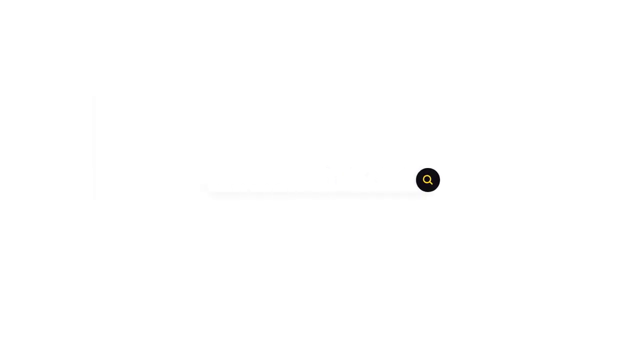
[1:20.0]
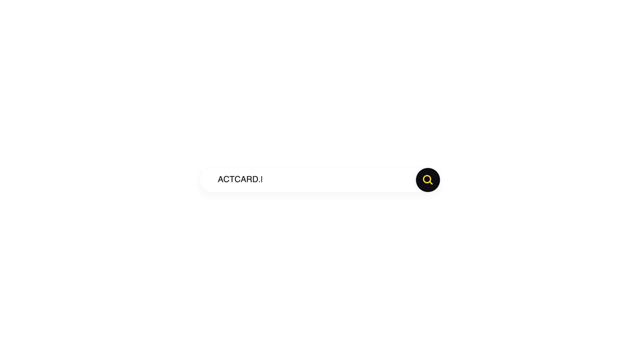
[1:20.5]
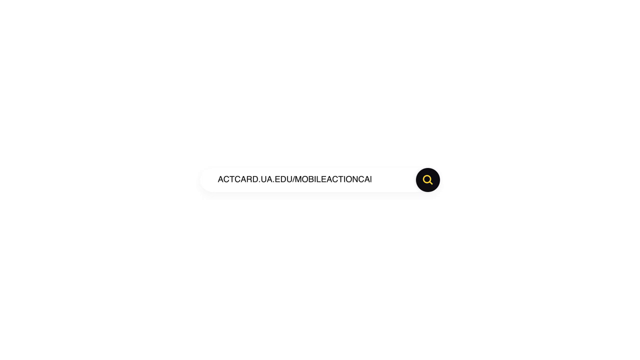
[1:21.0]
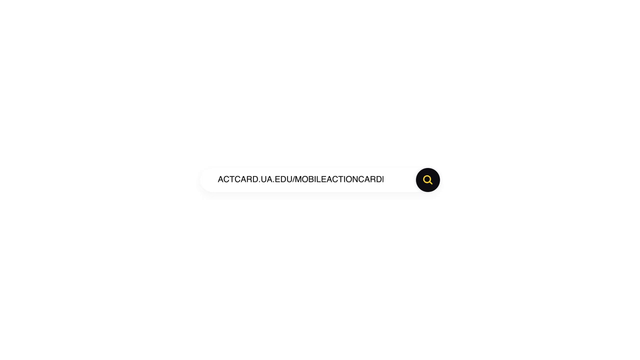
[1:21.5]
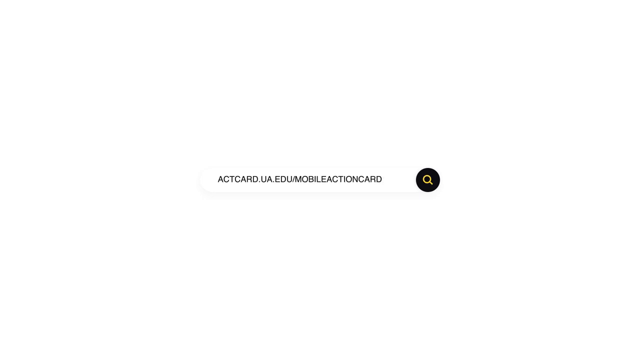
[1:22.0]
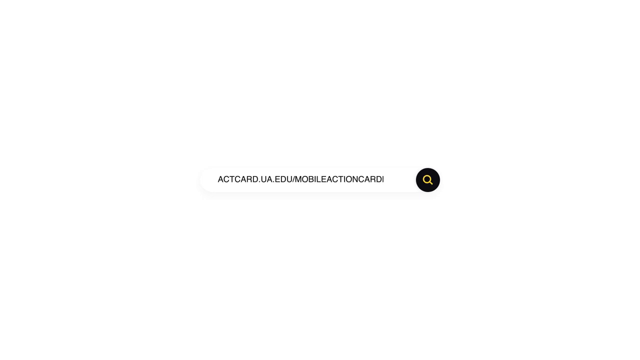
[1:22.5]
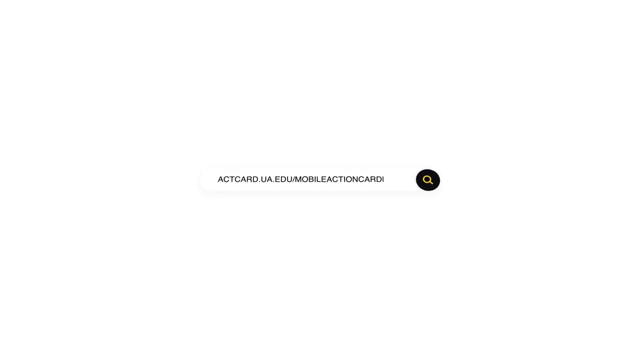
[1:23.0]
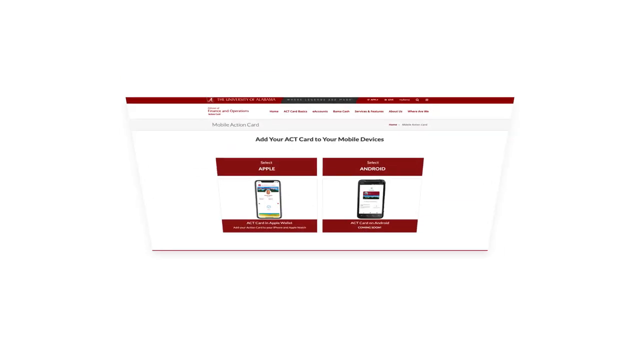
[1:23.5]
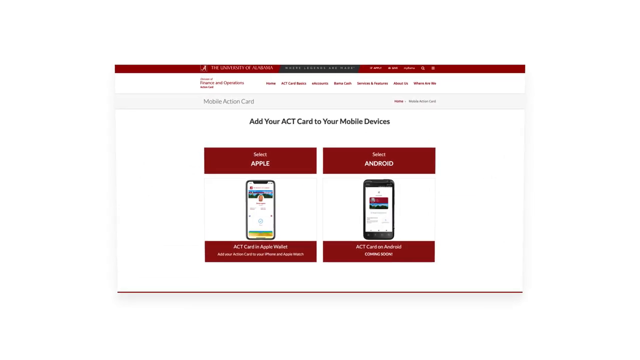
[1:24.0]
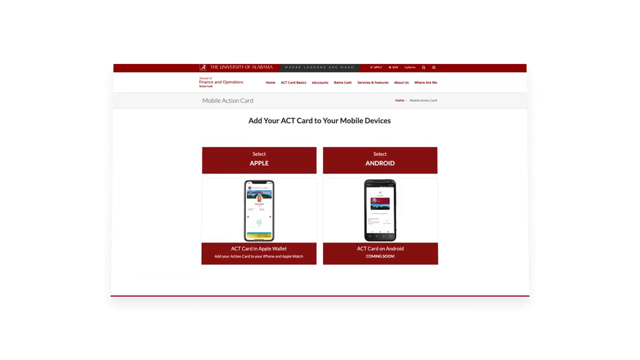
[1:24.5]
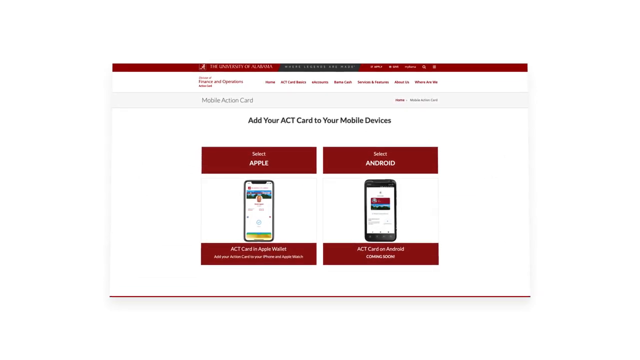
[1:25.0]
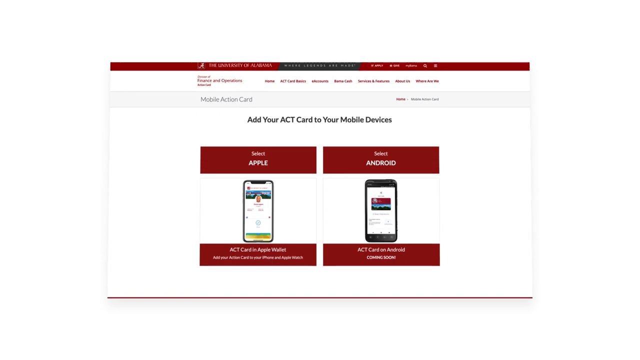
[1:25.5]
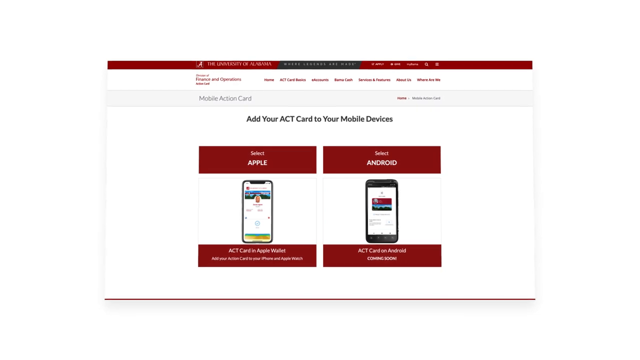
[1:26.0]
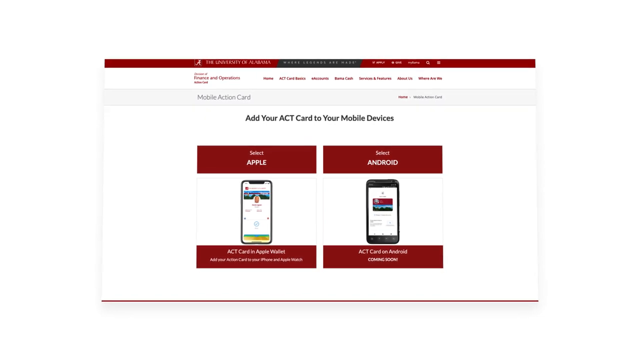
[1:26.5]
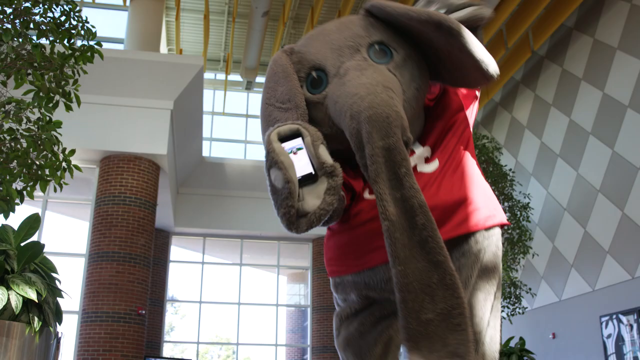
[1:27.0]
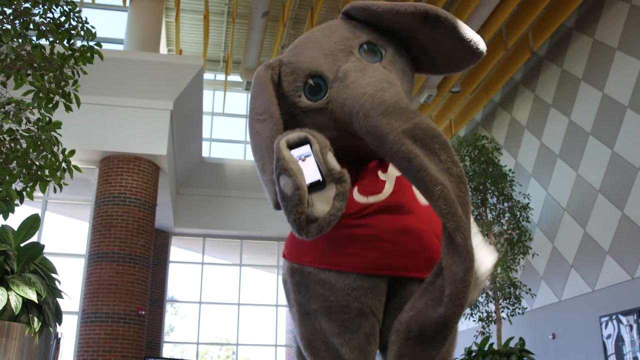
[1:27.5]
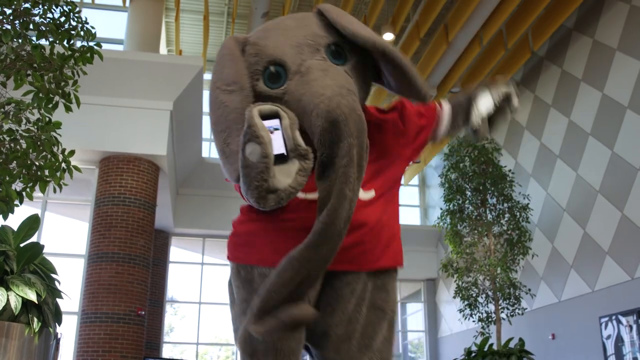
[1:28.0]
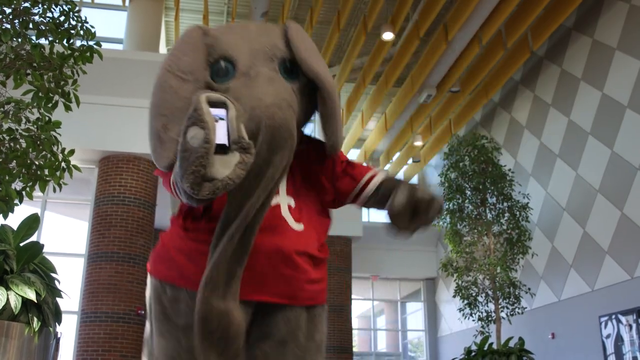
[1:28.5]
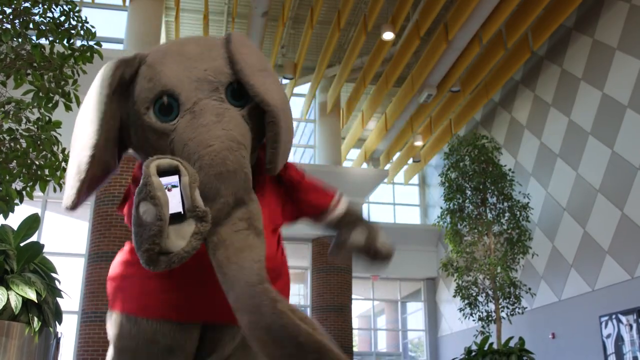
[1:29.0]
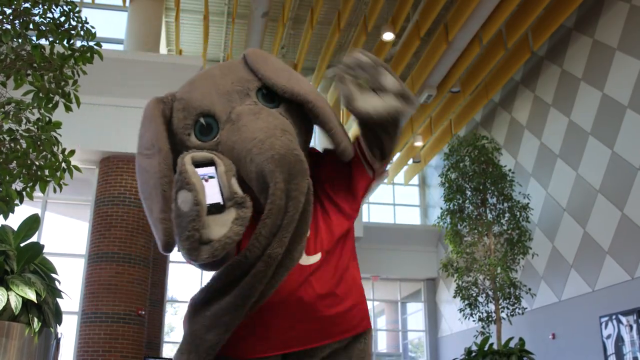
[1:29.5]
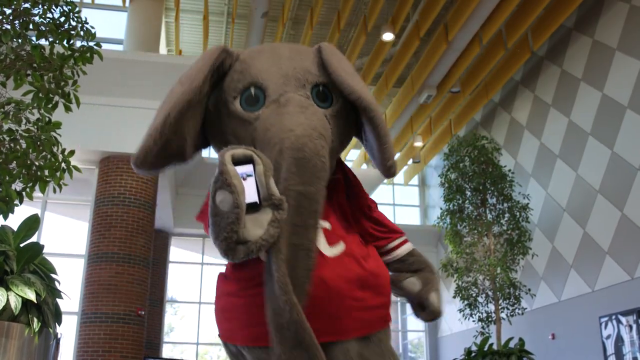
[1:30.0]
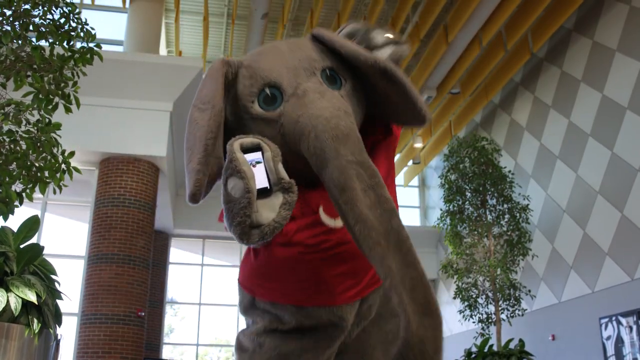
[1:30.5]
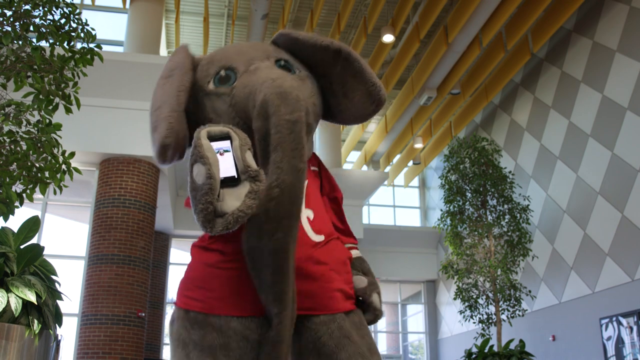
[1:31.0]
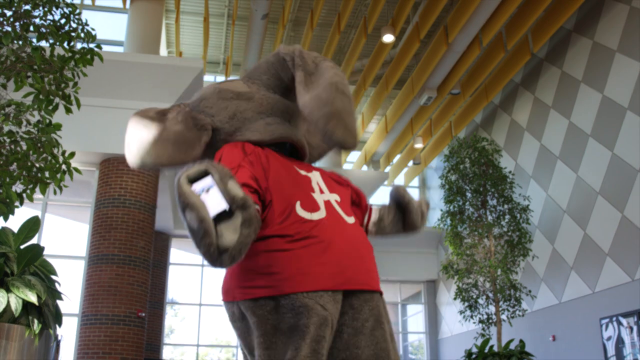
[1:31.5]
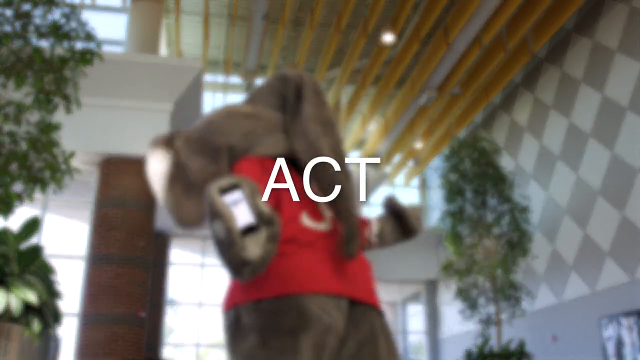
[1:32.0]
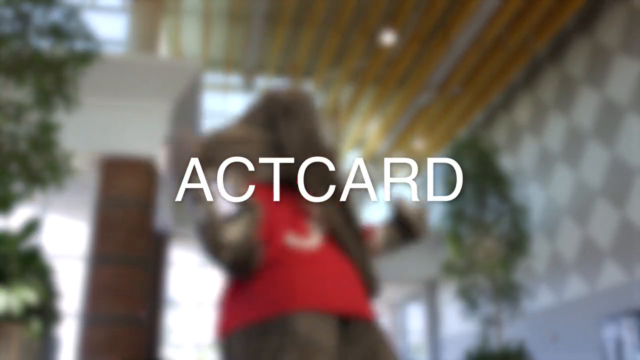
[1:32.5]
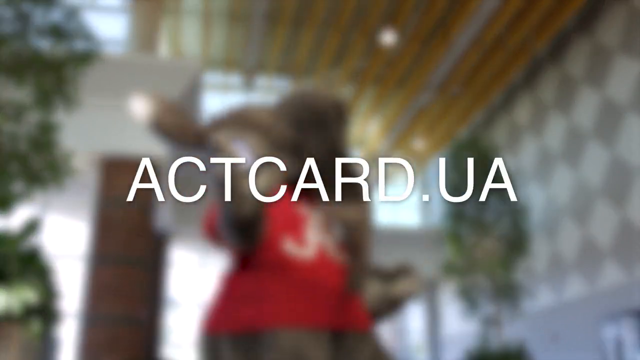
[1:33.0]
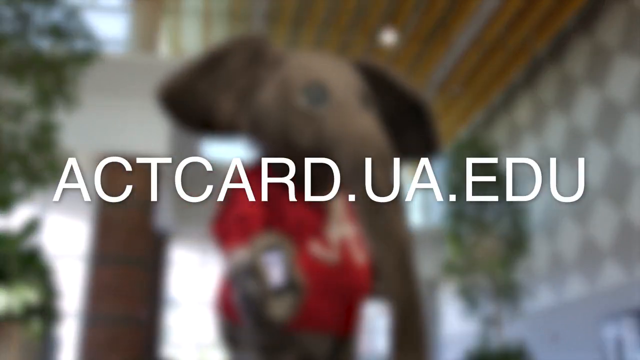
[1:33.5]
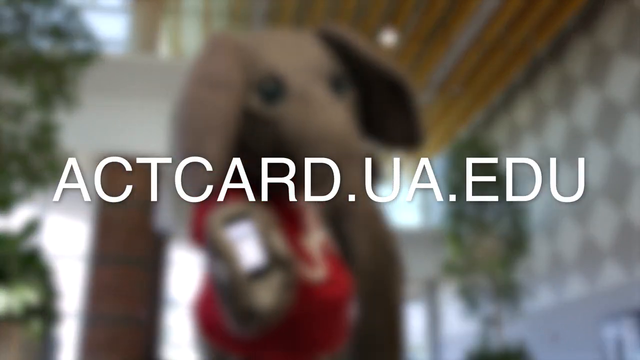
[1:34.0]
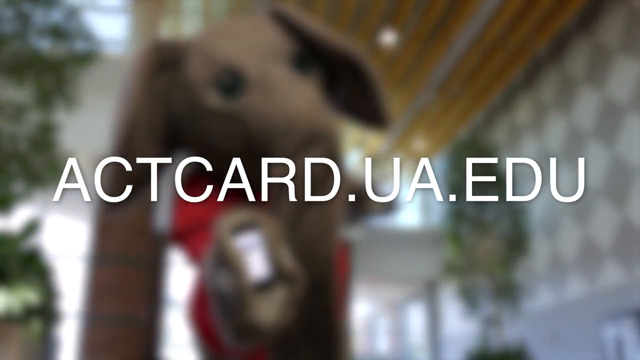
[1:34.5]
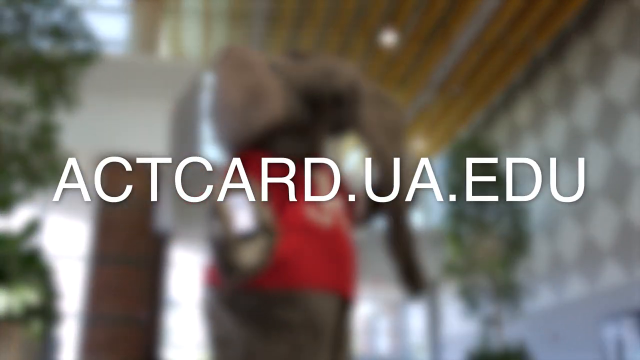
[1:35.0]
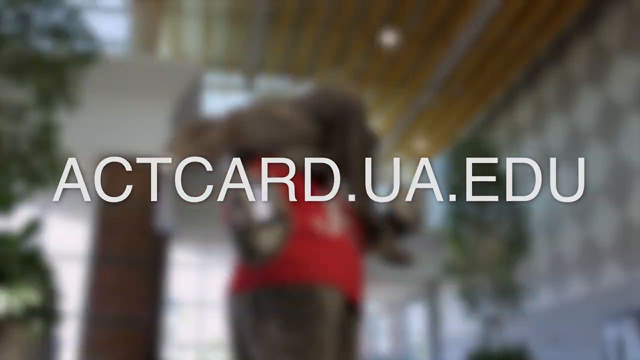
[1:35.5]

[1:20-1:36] The platform is shown with its two functionalities, Apple and Android. An elephant then dances with a mobile phone, waving its hand in the air. The elephant wears a red university t-shirt and is in a communal space that looks like a hall, with columns, some yellow pipes or something similar at the top, and a checkered pattern on the right side. The website "ACTCARD.UA.EDU" appears in all capitals in white font at the centre of the screen, like a hyperlink, as the elephant in the background becomes blurry, and then everything goes pitch black.